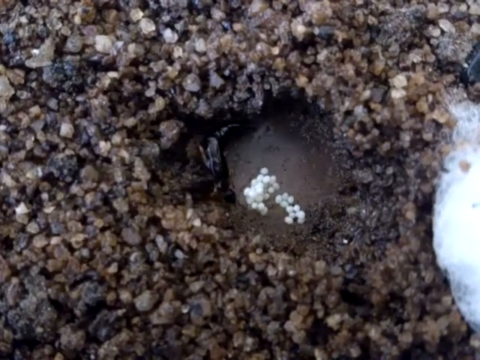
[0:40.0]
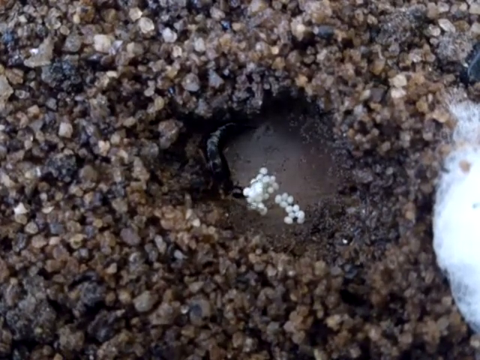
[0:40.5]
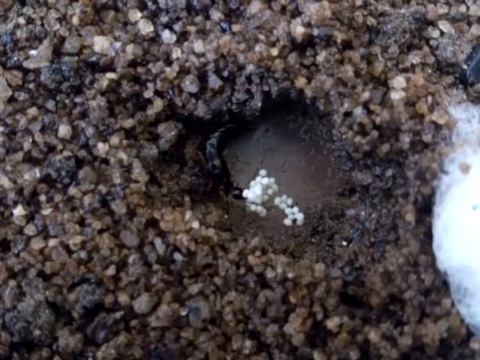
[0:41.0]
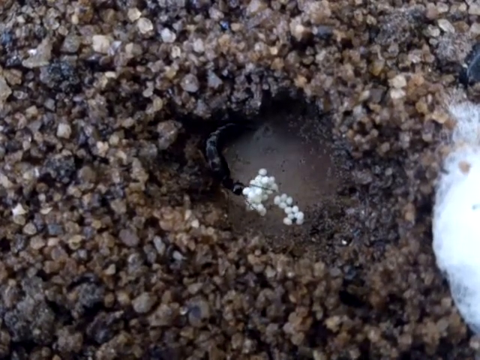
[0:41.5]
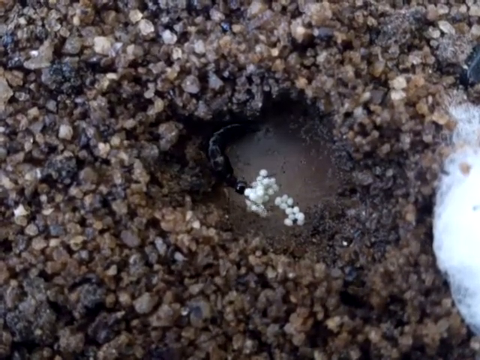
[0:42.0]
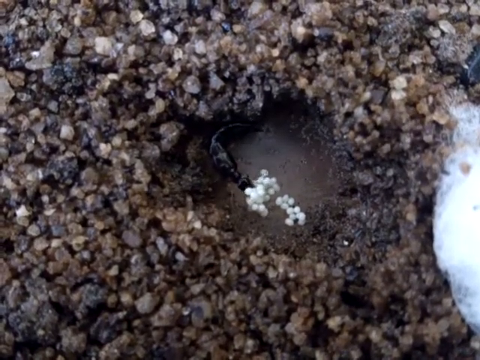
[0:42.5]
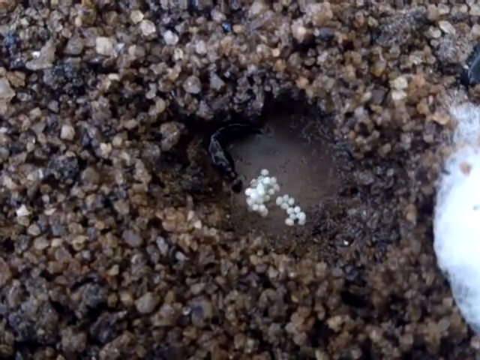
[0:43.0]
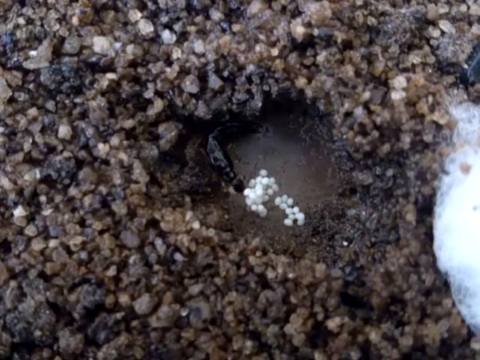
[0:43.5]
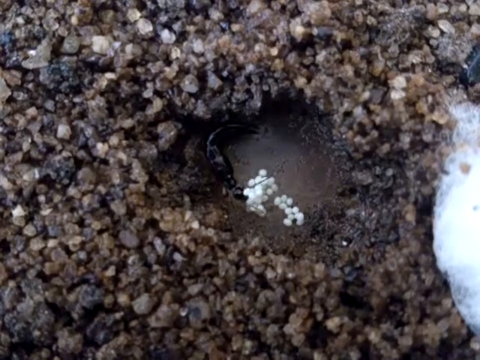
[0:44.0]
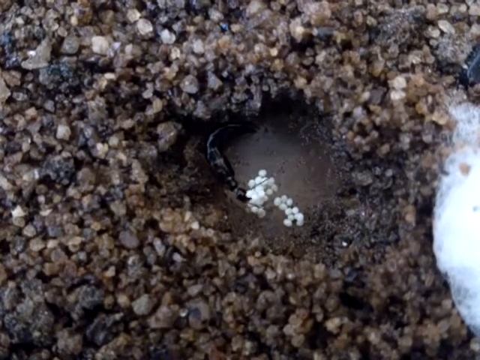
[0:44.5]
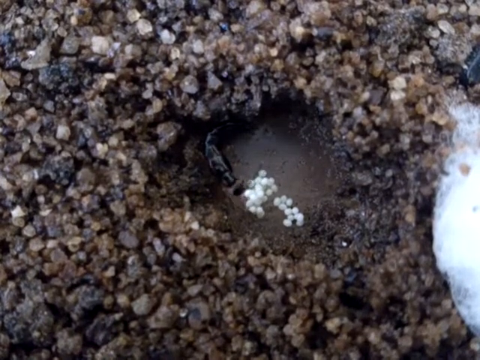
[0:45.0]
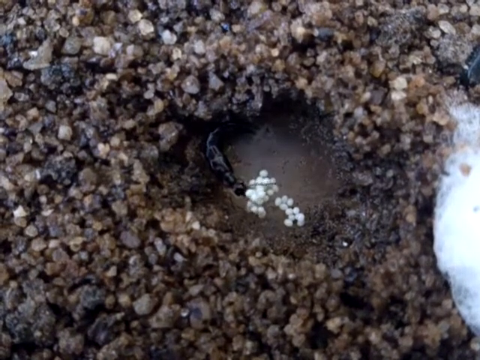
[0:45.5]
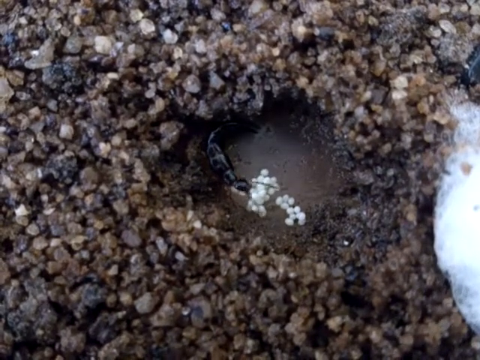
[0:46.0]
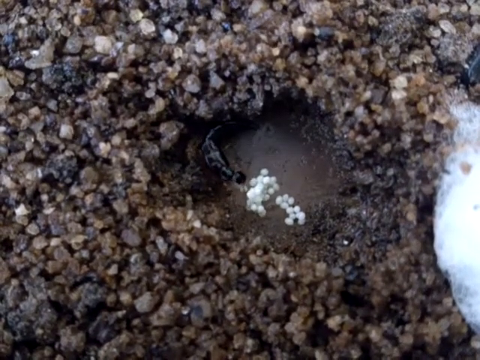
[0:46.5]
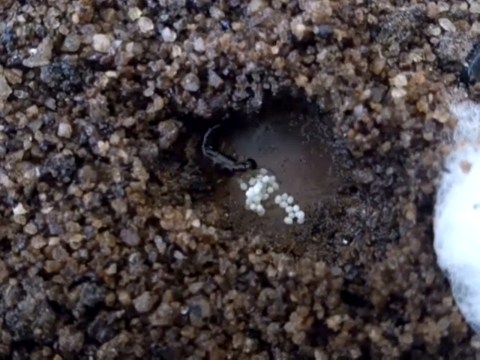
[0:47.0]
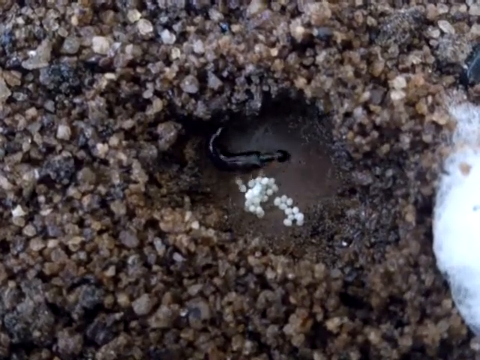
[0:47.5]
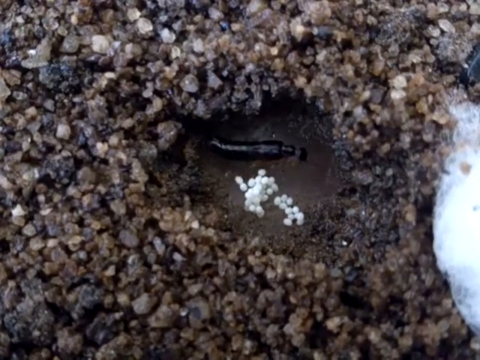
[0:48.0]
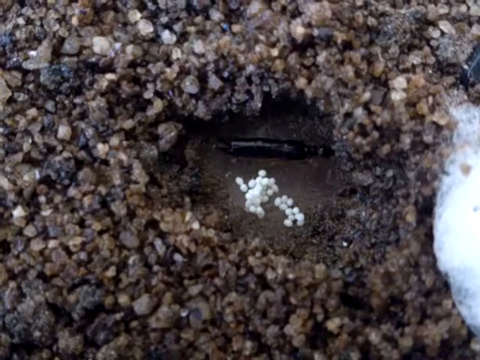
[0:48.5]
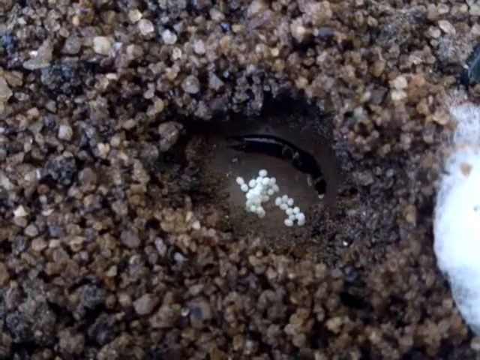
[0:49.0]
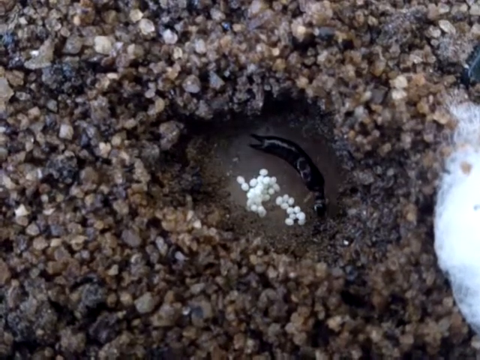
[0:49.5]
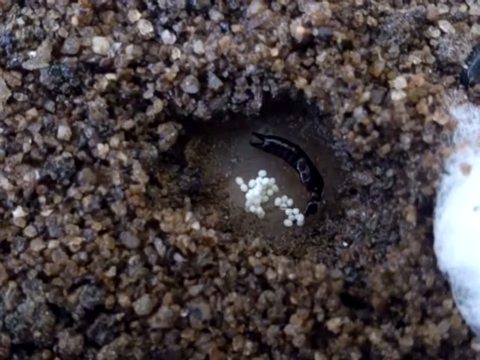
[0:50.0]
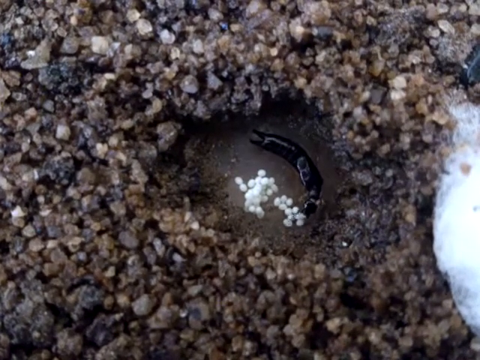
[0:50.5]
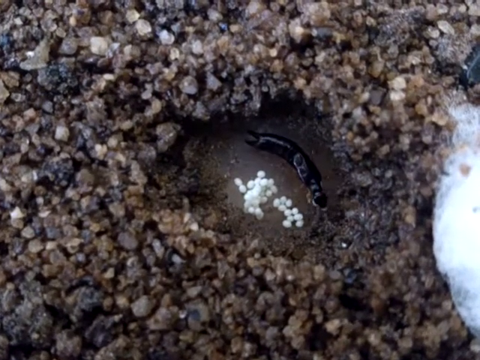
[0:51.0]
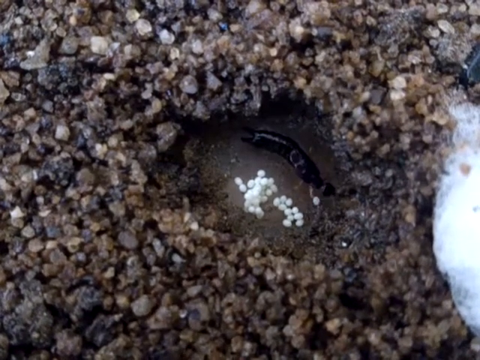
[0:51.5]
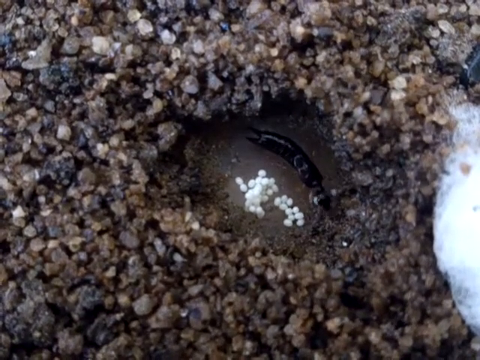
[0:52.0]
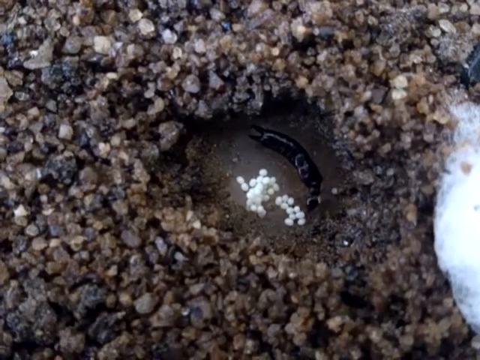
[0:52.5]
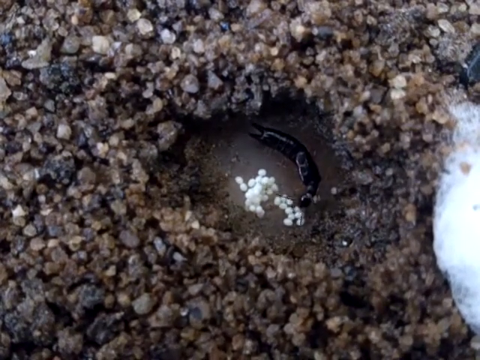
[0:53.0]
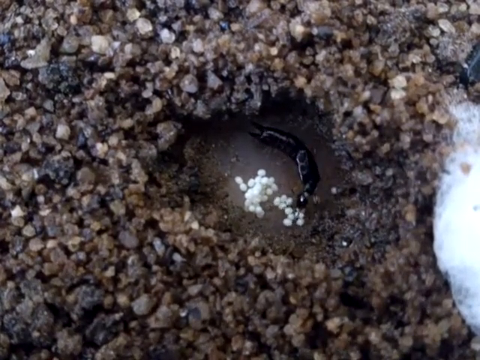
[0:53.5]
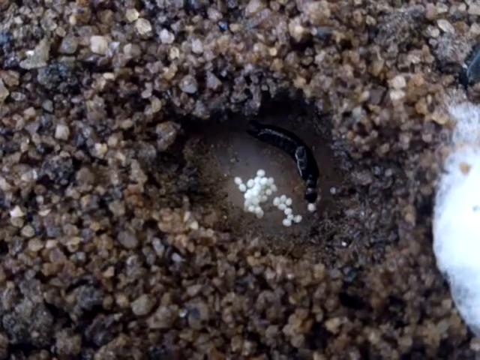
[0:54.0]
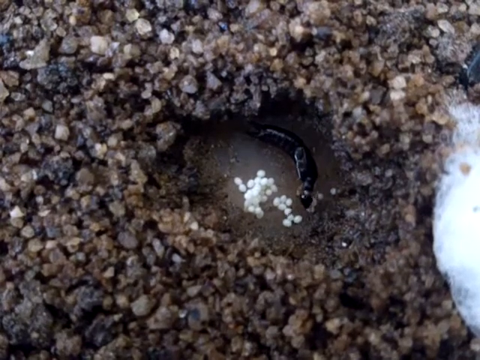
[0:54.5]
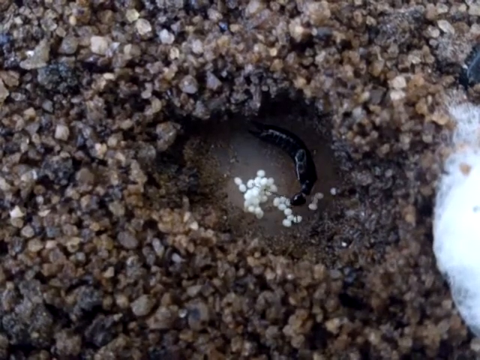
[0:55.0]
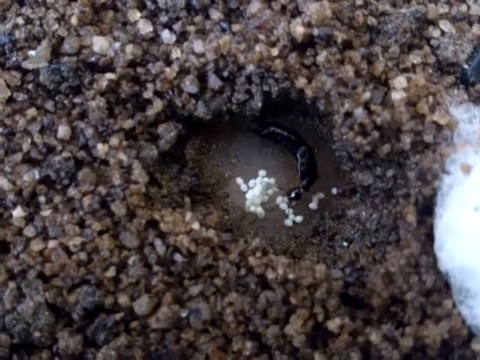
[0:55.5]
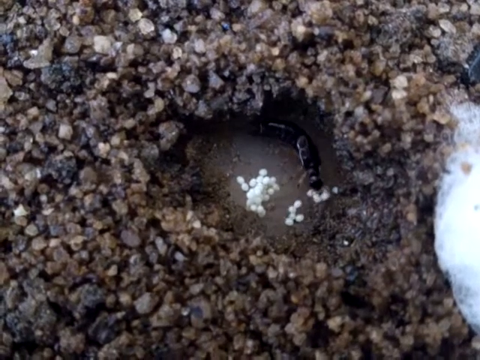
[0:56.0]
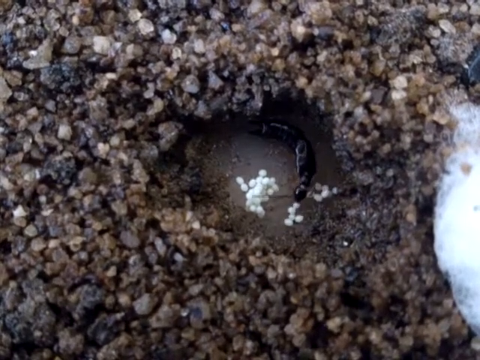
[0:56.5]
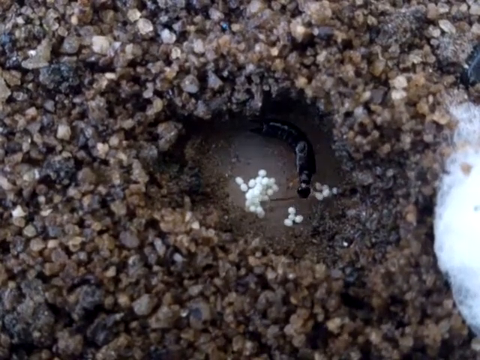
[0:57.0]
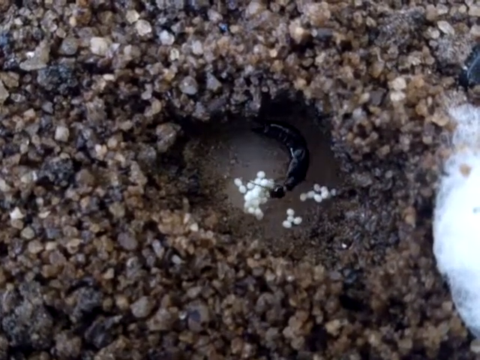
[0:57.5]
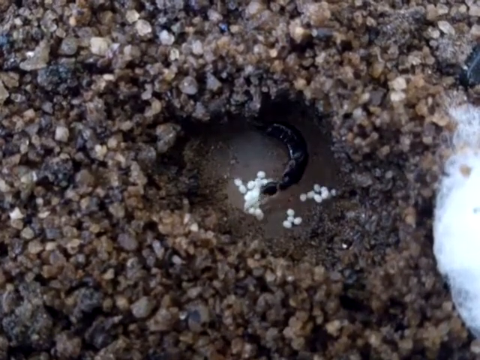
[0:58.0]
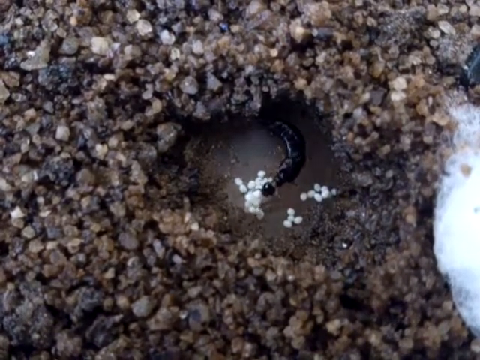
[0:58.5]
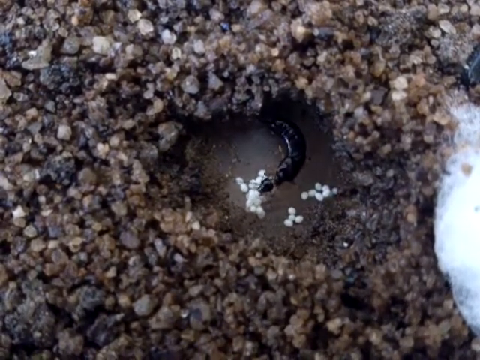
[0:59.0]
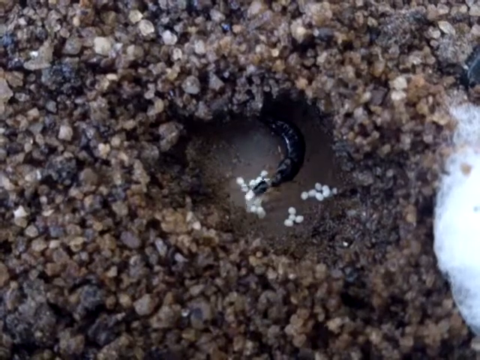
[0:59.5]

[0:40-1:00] A very small pool of water sits in very gravelly wet ground; it appears to be no larger than a couple of inches across. A large black insect is there, very long, as long or nearly as long as the pool is wide, shiny, with long antennae. Very small white balls, apparently eggs, are inside the pool, and the insect shifts and moves them around as if rearranging them. The insect clearly takes them from a clump and moves them so they are more spaced out within the pool. The pool is very shallow and looks like it could hold less than half a cup of water.